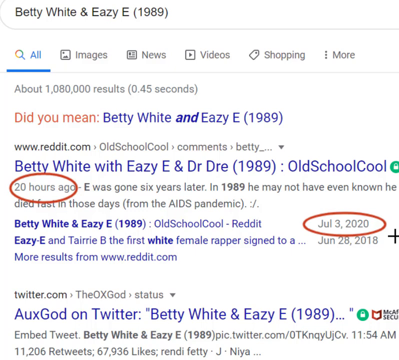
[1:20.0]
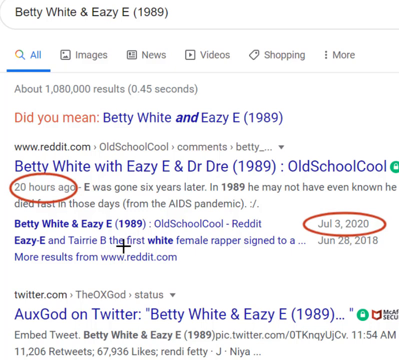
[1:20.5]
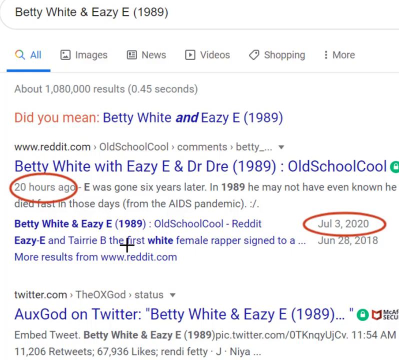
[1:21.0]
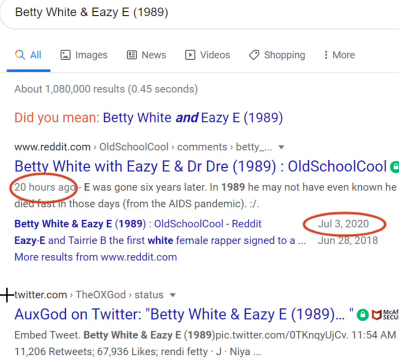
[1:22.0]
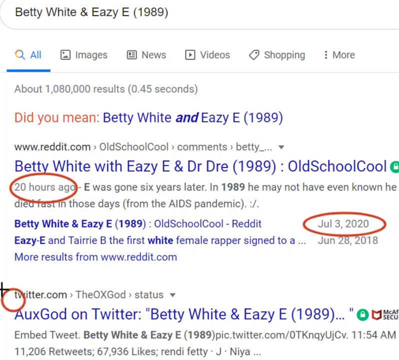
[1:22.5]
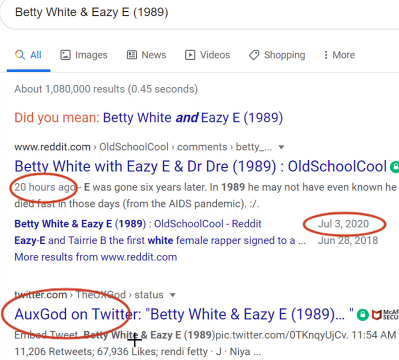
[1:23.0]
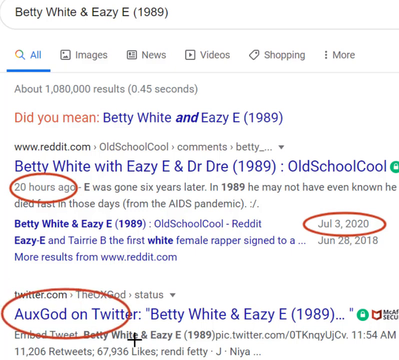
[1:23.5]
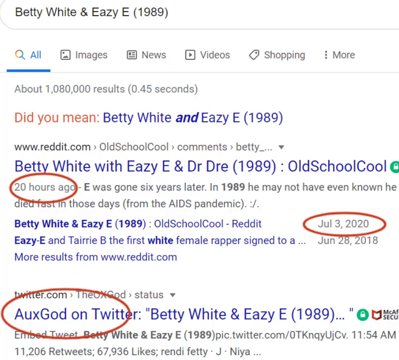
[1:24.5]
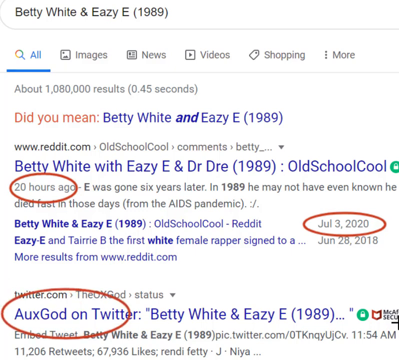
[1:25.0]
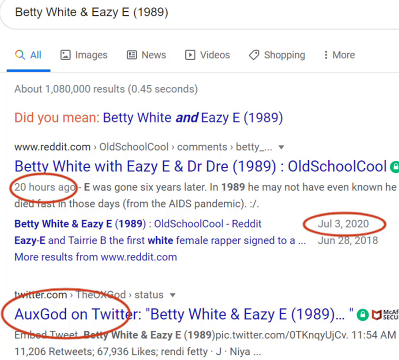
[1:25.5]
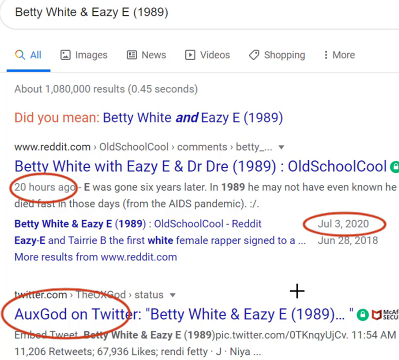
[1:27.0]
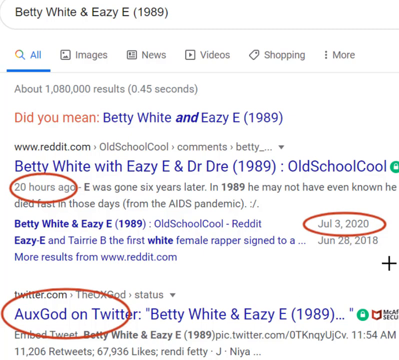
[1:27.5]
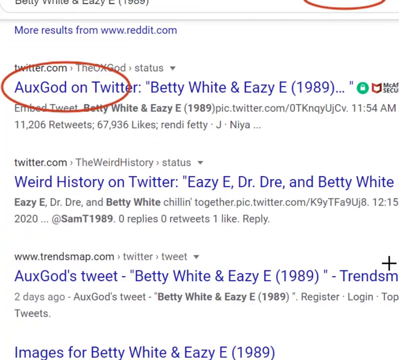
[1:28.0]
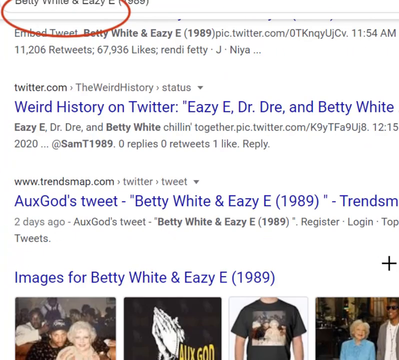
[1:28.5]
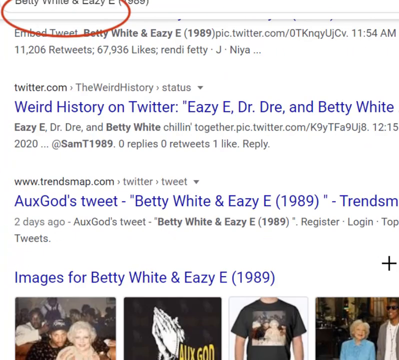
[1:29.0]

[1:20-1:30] The Google page has the search bar across the top reading "Betty White and Easy E". Underneath, from left to right, are the options all, images, news, video, shopping and more, followed by the number of results and how long the search took. Next come the links: one for Reddit with some information and a few links under it. A red circle surrounds "20 hours ago" right under the Reddit link, and on the right side under the Reddit link, "July 3rd, 2020" is circled in red. Below that is a Twitter link. The cursor moves to the middle, then down to the Twitter link, and a circle is drawn around "Ox God on Twitter". The page scrolls down a little, revealing another Twitter link.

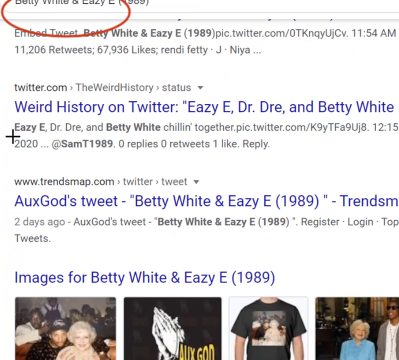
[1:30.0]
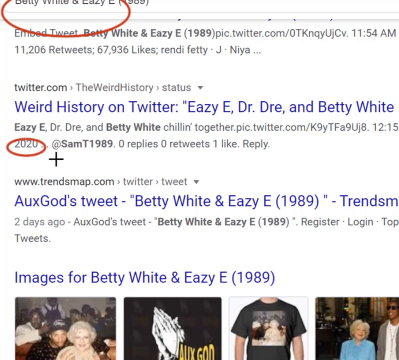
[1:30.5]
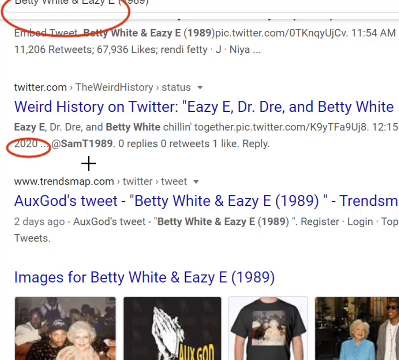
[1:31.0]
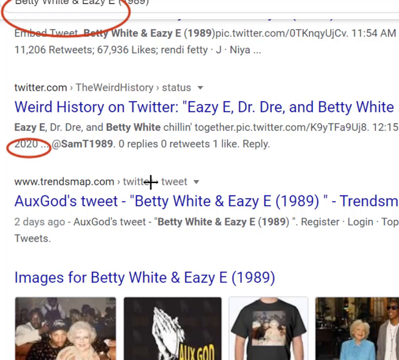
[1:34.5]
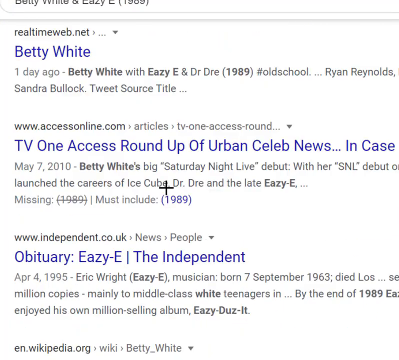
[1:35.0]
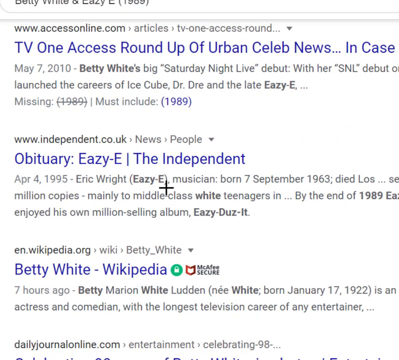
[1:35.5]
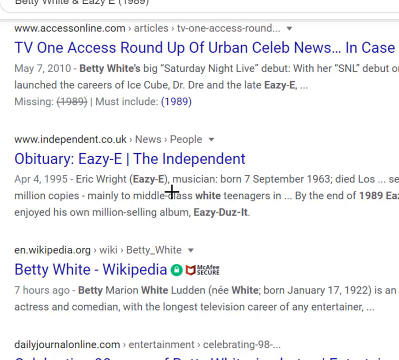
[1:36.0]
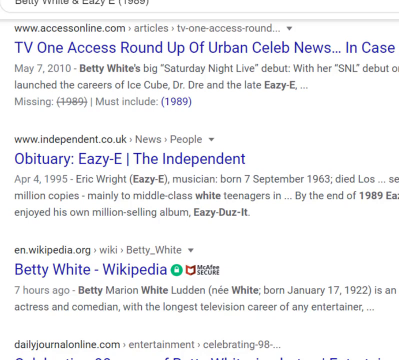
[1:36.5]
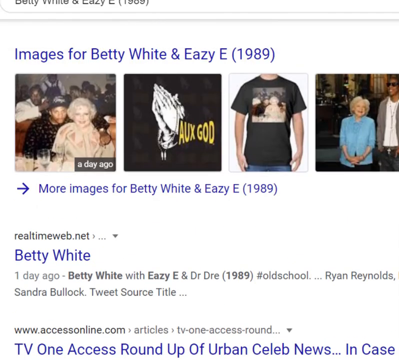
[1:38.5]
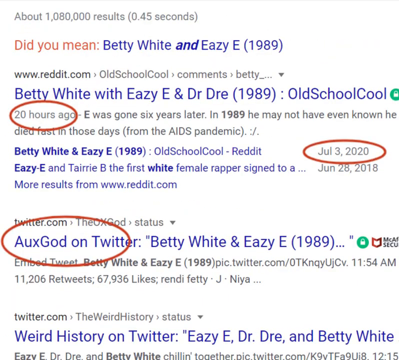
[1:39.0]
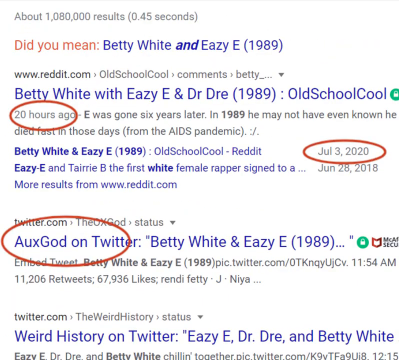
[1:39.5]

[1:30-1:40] The page is scrolled down to a Twitter link that says "Weird History on Twitter", with "www.trendsmap.com" and the Ox God tweet below it. Further down it says "images for Betty White and Eazy-E", and across the bottom the upper edges of four images are visible, going left to right. At the top Twitter link, "Weird History on Twitter", a red circle is drawn around "2020" with the cursor, which is a black plus sign. The page then scrolls down to more links, one for Access Online and a couple of others, and then scrolls back up to the "Weird History on Twitter" link.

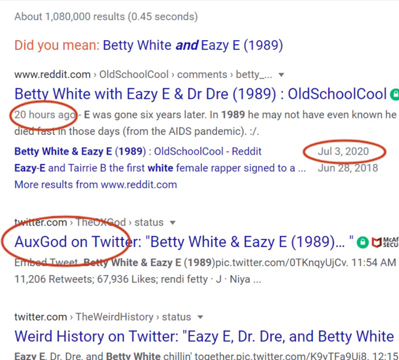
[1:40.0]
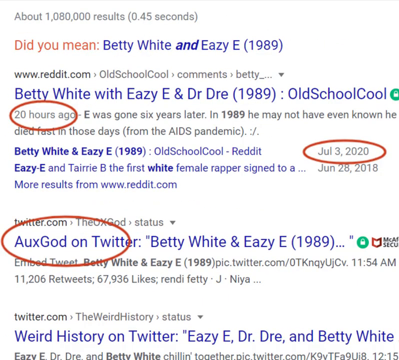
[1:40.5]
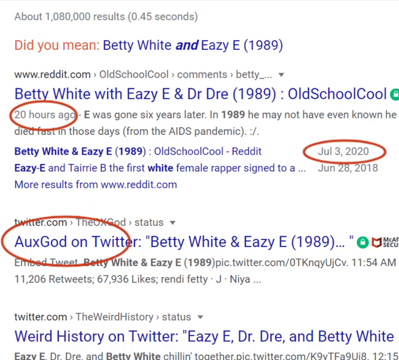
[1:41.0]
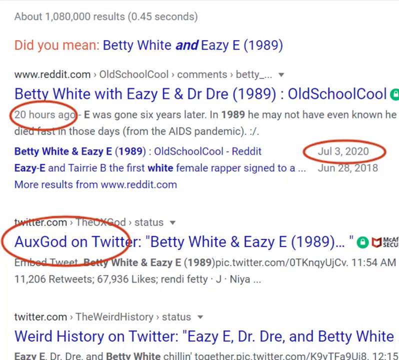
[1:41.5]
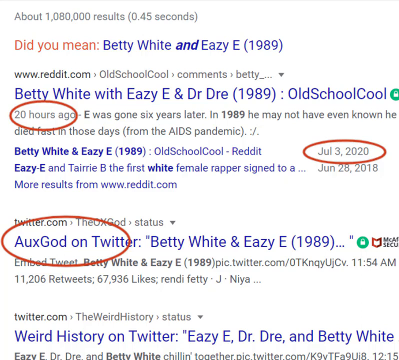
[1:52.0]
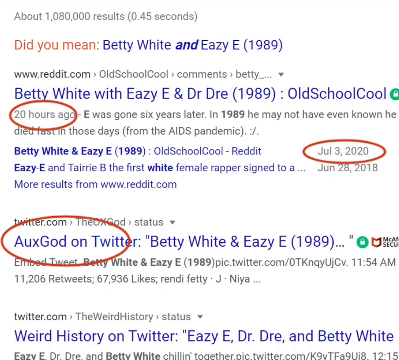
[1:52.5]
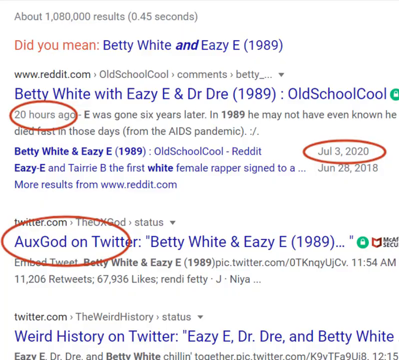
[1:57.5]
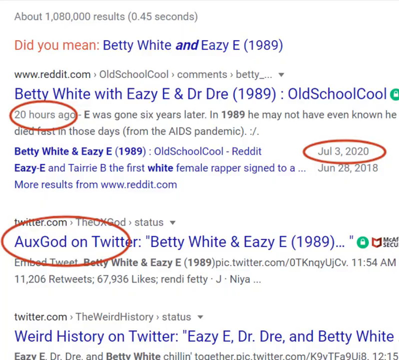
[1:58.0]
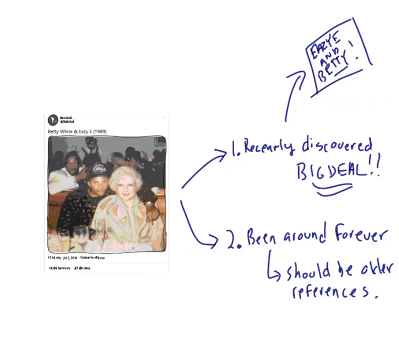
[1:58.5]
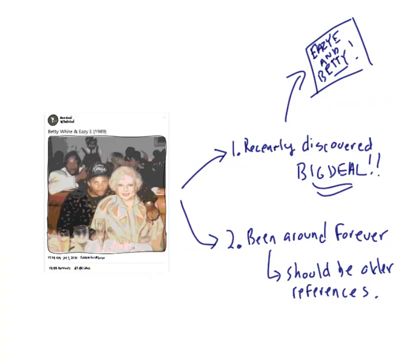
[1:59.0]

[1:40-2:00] The page is scrolled back up to just under the search bar. In the top left it reads "about 1,000,080,000 results" and "0.45 seconds". Below that is "did you mean" in red, with "Betty White and easy" in blue. Underneath is a Reddit link with "20 hours ago" circled in red and, on the right side, "July 3rd, 2020" circled in red. Below that, a Twitter link has "Ox God on Twitter" circled in red, and below it is another Twitter link. The view stays still on the Reddit link, which has two lines of black text and two blue links underneath. The video cuts back to the earlier image with the arrows pointing off it for just a second, then returns to the Reddit link, which has two lines of information, two blue more results, and below that "more results on Reddit".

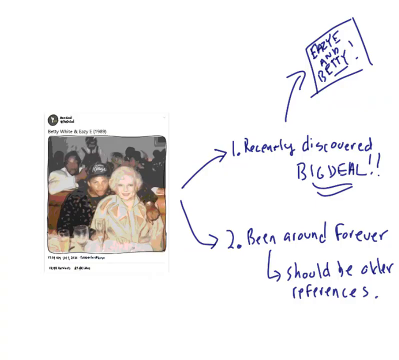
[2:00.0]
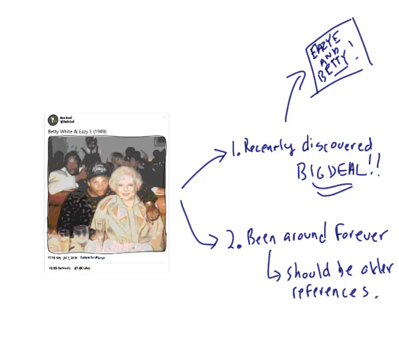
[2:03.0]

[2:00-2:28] On the white background, the image and tweet are on the left side in the center, with an arrow going up to the right and an arrow going down with the blue writing someone added. The upward arrow says "1 recently discovered big deal", with an arrow above it pointing up and a little square that says "EZE Embedded". The arrow going down to the right says "2 been around forever", followed by another arrow going down to the right and the words "should be older references". The Twitter handle above the image cannot really be made out. Below it, the text reads "Betty White and Eazy-E, 1989", and beneath that is the image of Betty White superimposed next to Eazy-E. Eazy-E is on the left with his arm around her, and she is on the right; both look directly at the camera. A couple of glasses of champagne or wine are down to the left of them. Two lines of text under the image are dark and impossible to make out. Behind Eazy-E to the left is Dr. Dre, just behind the couch they are sitting on, looking off to the left.